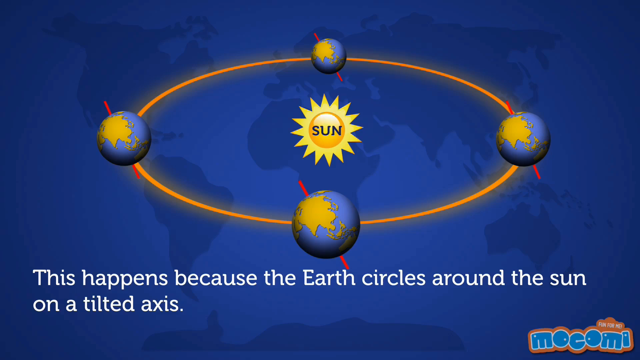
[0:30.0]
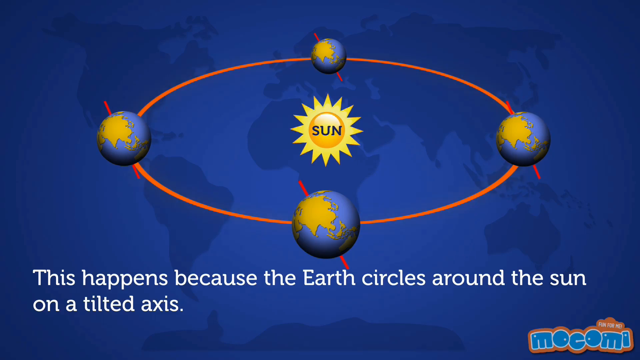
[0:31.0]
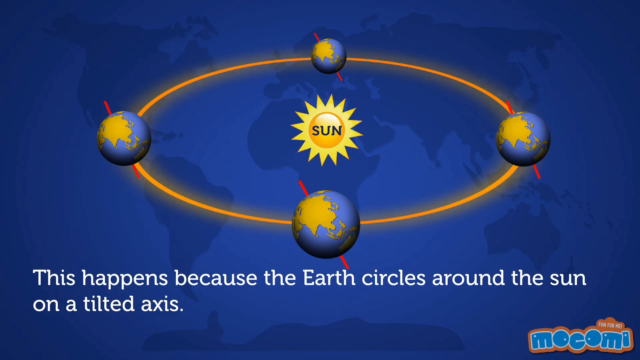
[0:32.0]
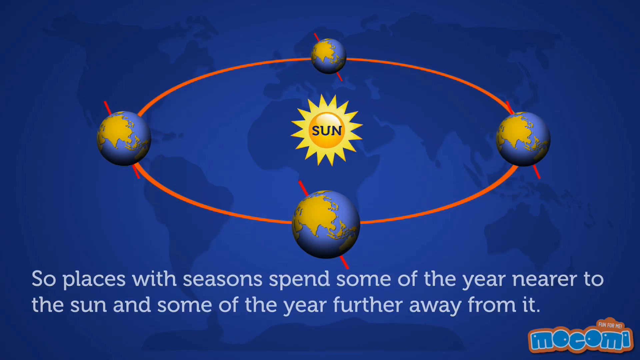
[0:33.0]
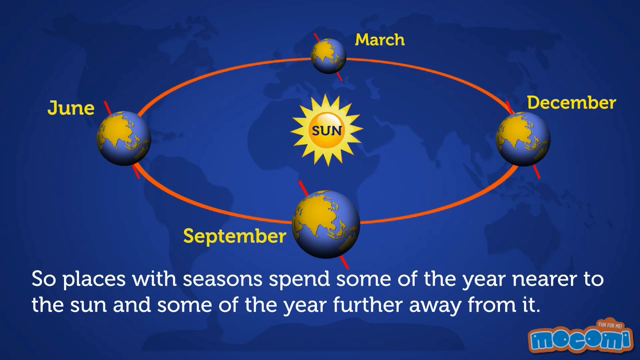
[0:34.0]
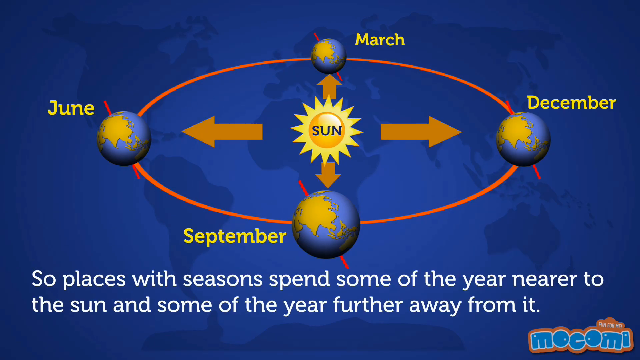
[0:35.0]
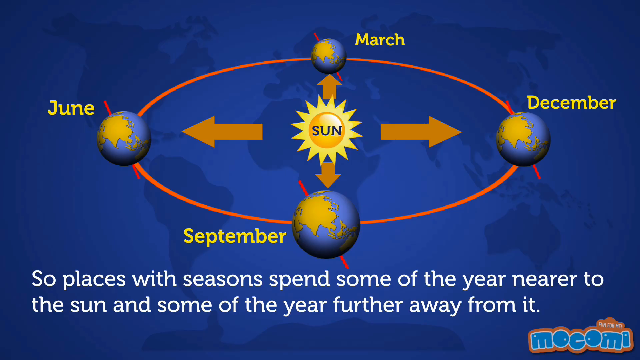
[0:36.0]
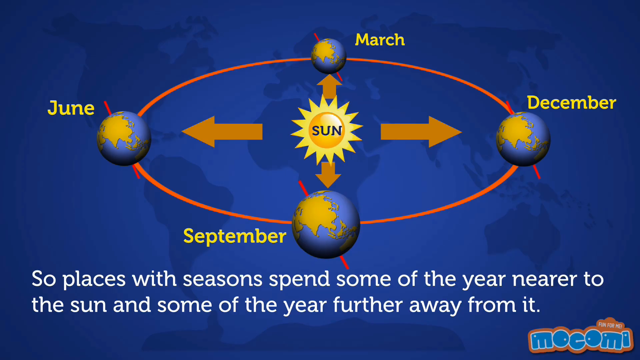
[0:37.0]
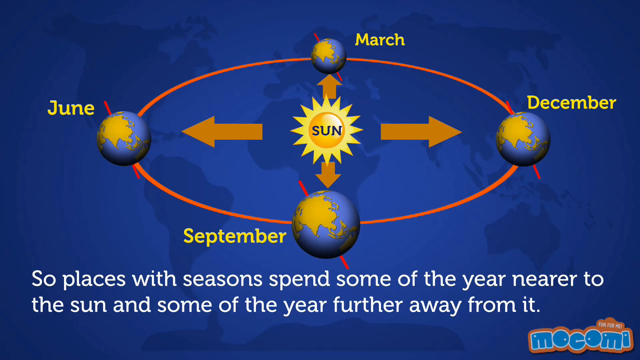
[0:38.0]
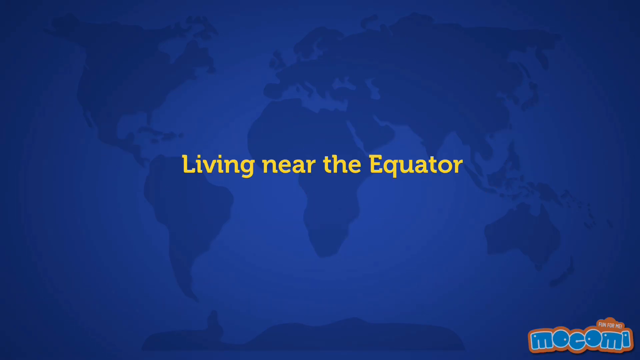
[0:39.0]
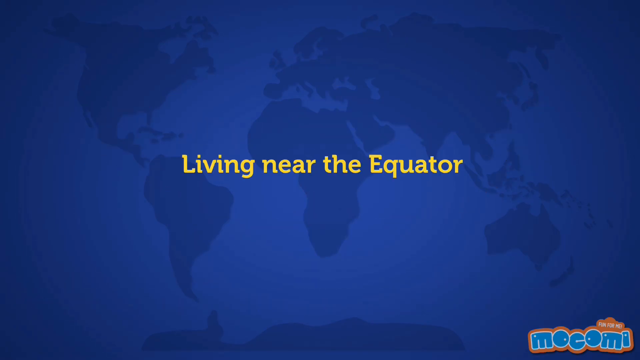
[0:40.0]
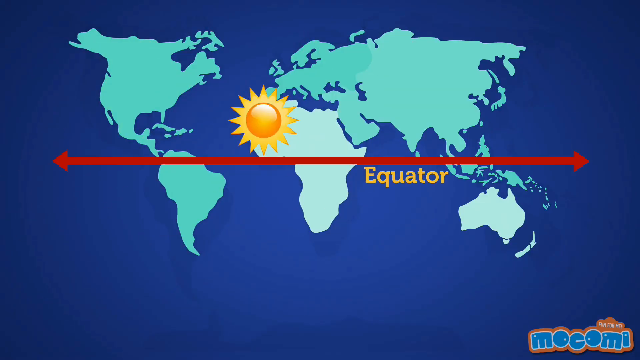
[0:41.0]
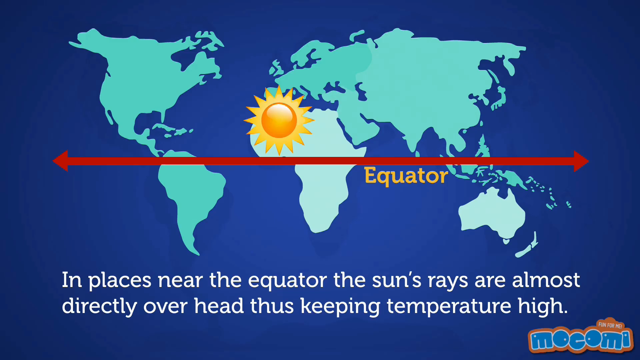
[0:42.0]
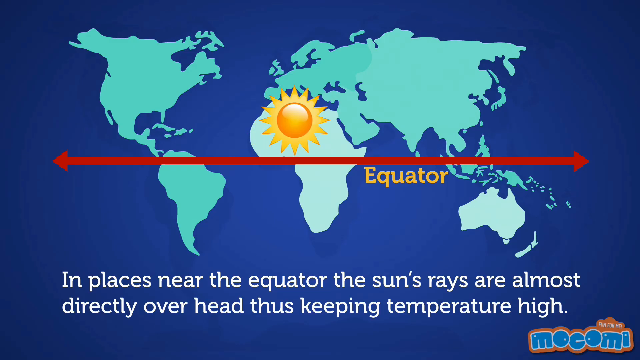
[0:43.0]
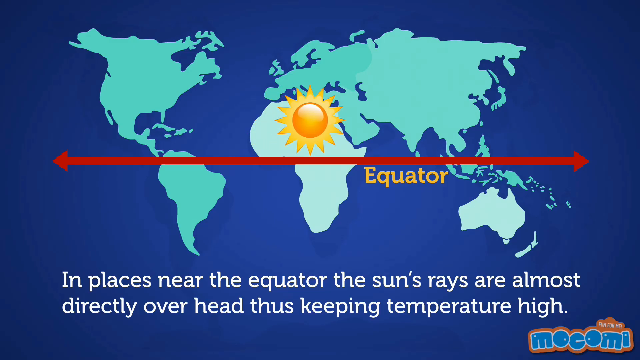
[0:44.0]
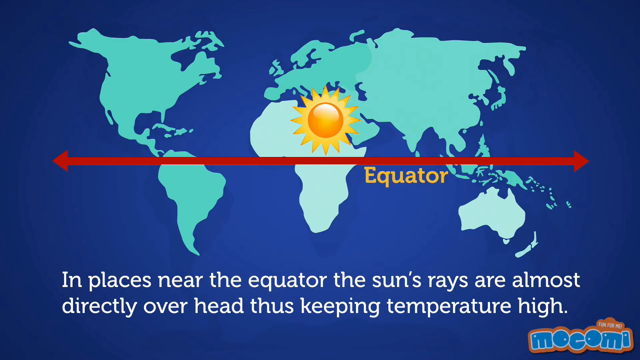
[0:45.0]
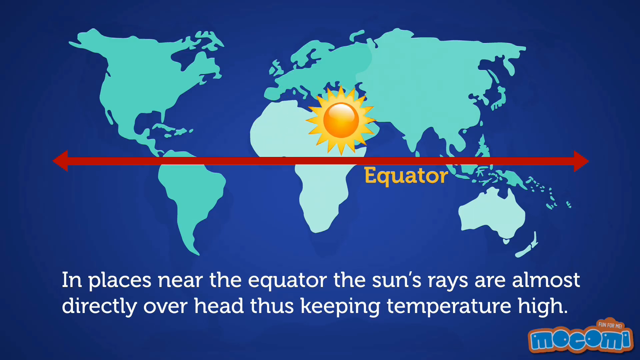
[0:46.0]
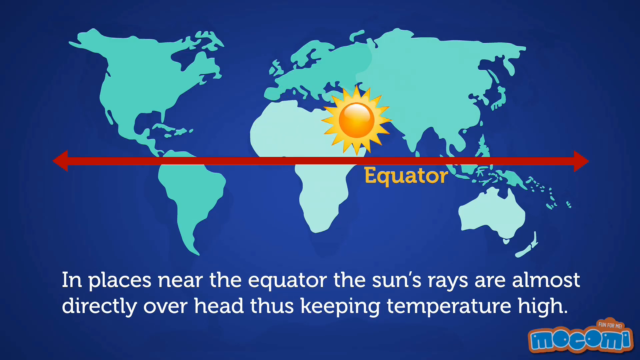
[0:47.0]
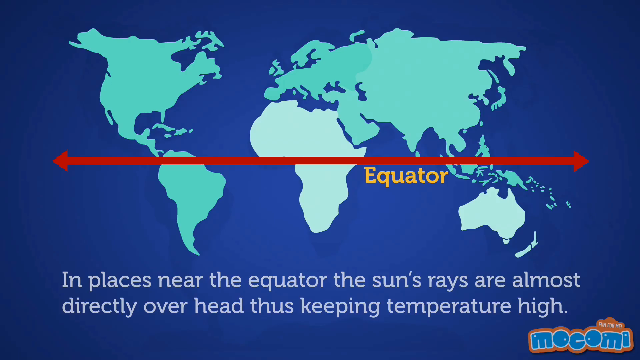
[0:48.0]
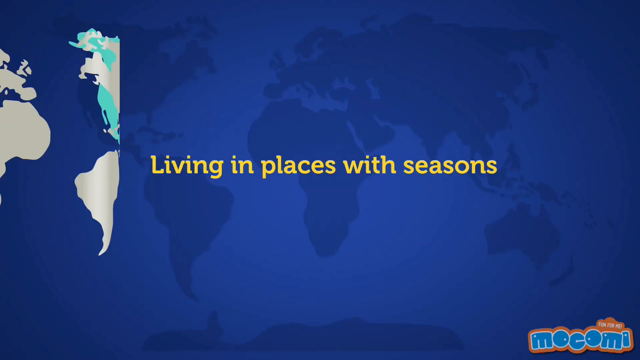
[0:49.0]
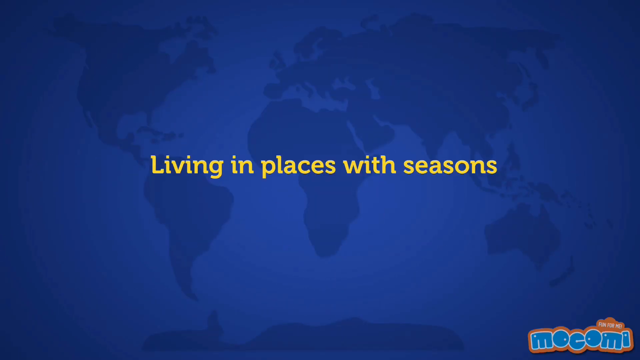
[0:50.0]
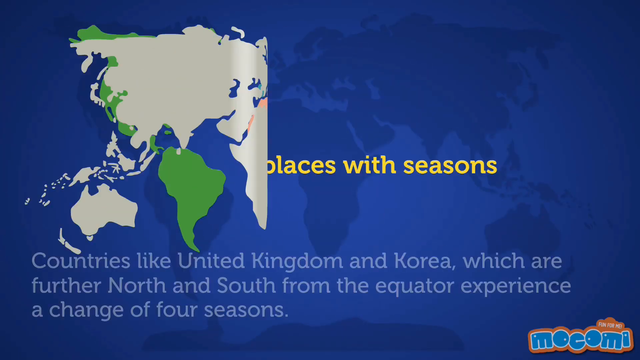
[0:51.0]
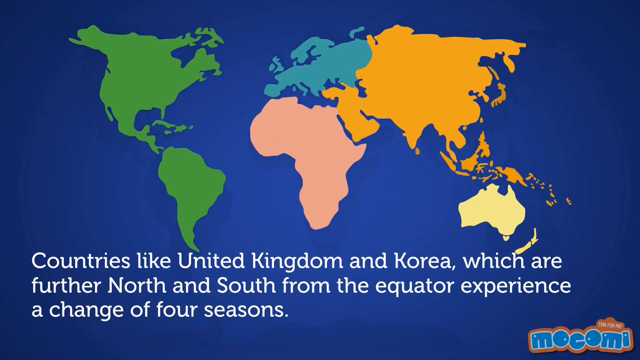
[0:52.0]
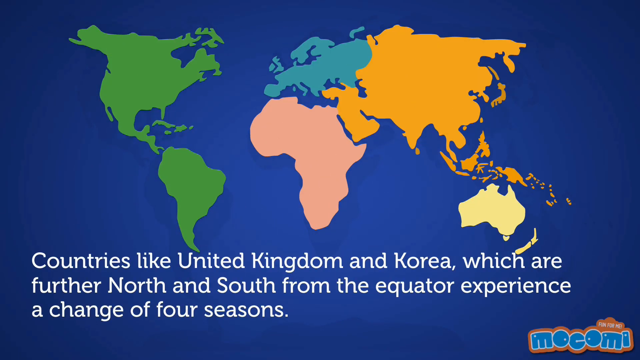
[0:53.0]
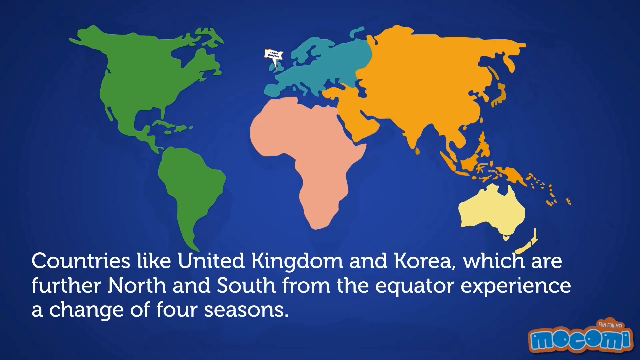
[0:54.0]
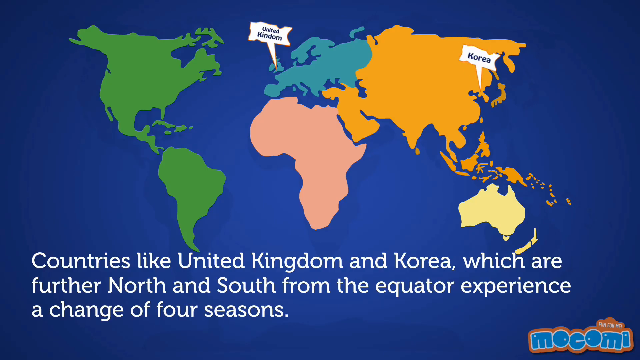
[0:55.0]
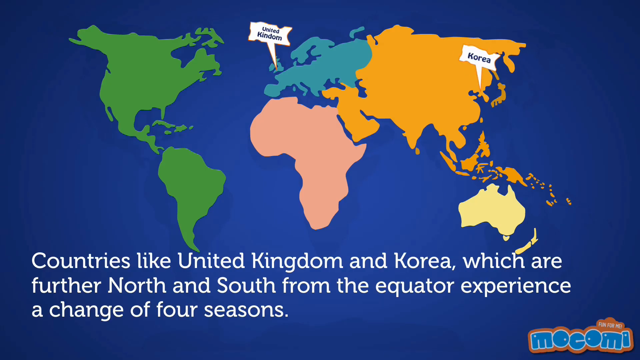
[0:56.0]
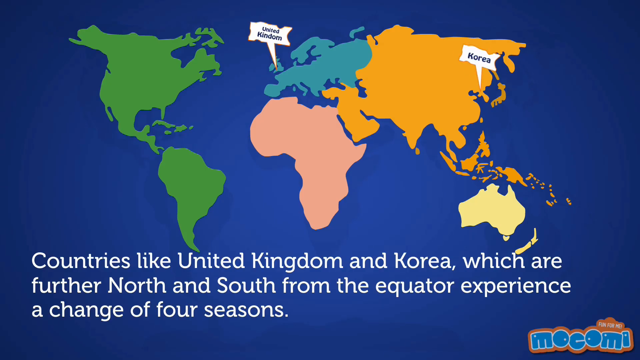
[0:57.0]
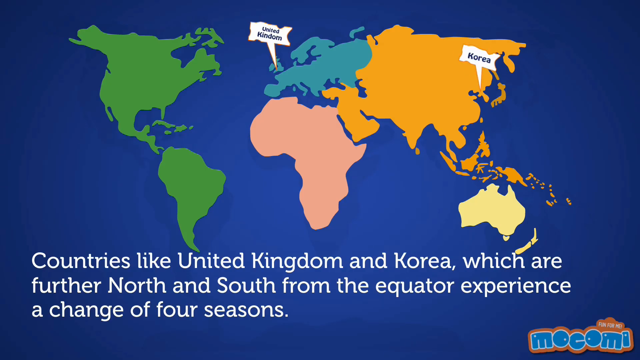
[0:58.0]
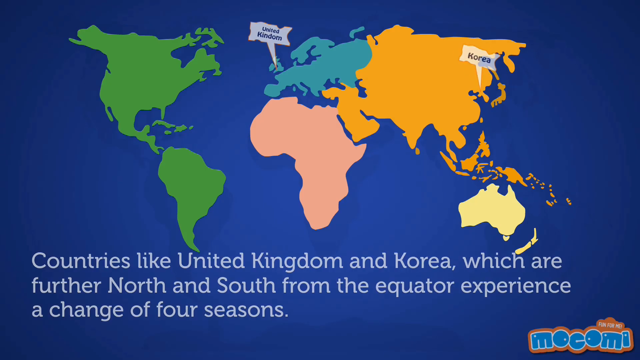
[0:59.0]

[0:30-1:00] The background of the map in two different blues continues. The planet is shown rotating around the sun, with different parts of the planet at different distances from the sun depending on where the planet is along its path, which is shown as not completely round. The planet has little clouds, and the drawings are very elementary and simple. Months pop in to mark the times of year and the distance from the sun, but they appear too quickly to read easily. The pictures of the planet at the different points along the path are identical.